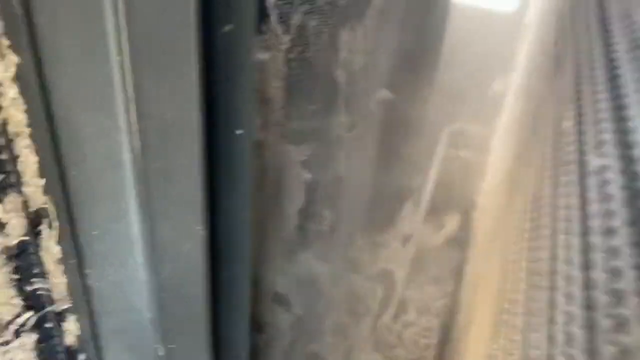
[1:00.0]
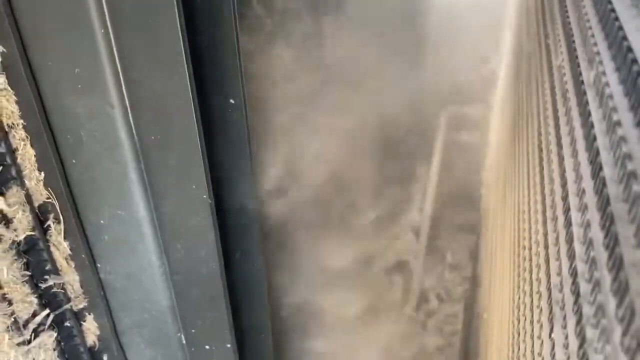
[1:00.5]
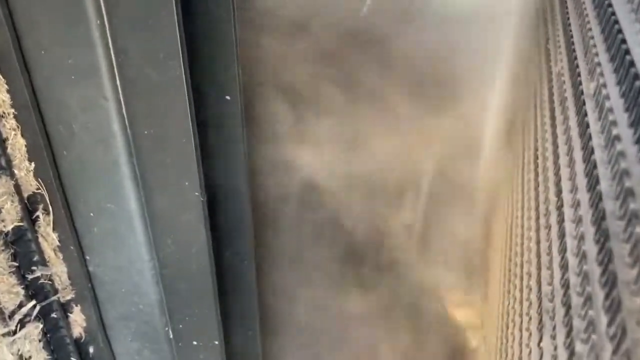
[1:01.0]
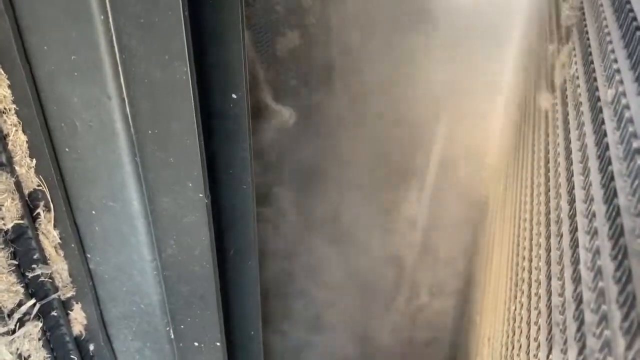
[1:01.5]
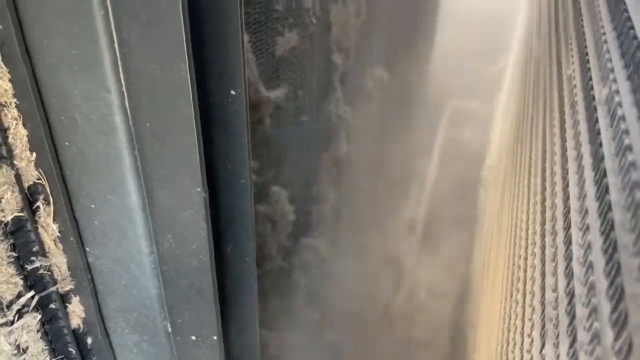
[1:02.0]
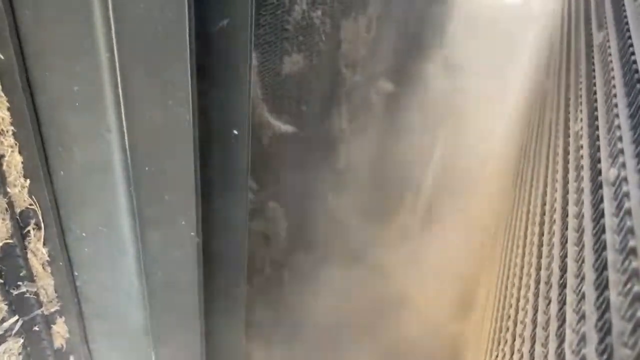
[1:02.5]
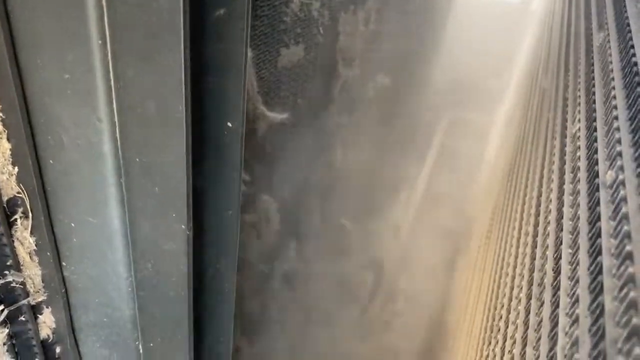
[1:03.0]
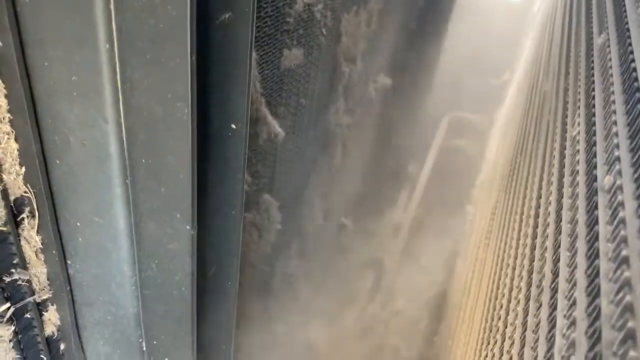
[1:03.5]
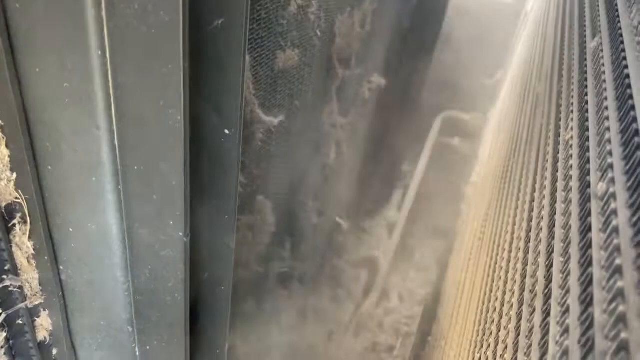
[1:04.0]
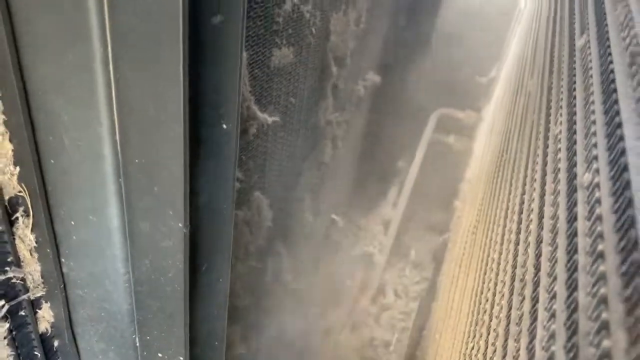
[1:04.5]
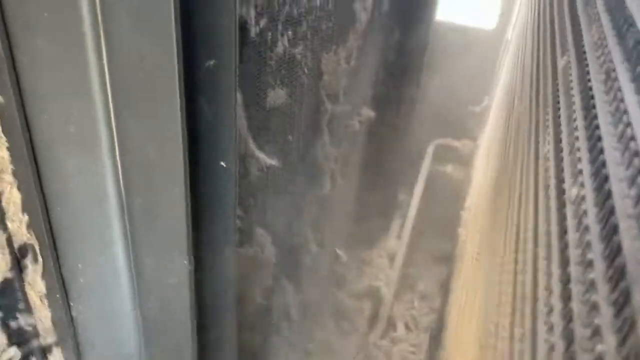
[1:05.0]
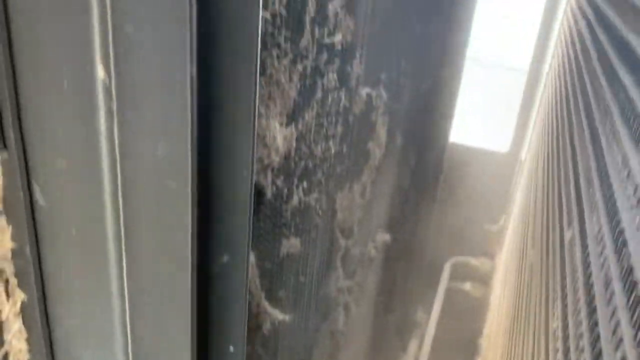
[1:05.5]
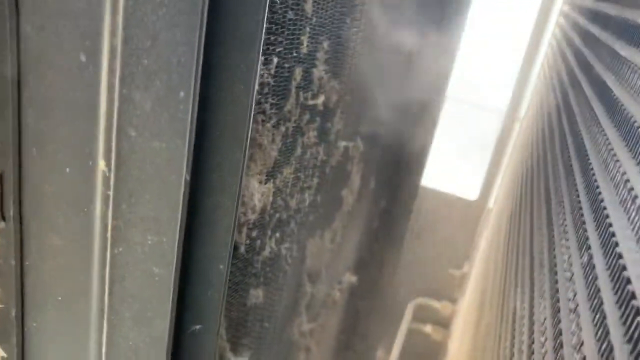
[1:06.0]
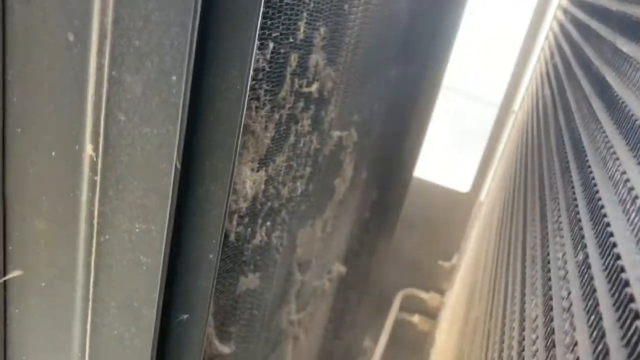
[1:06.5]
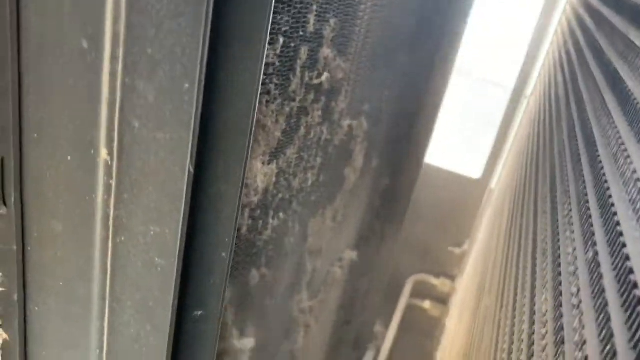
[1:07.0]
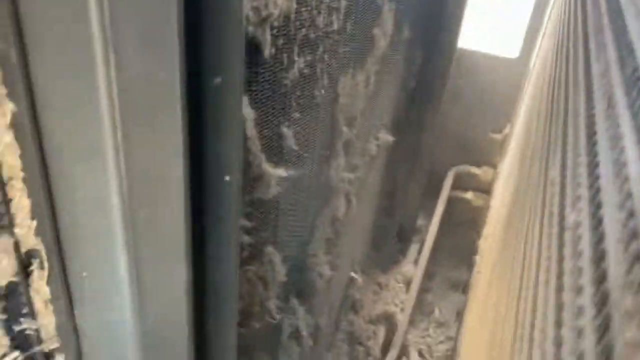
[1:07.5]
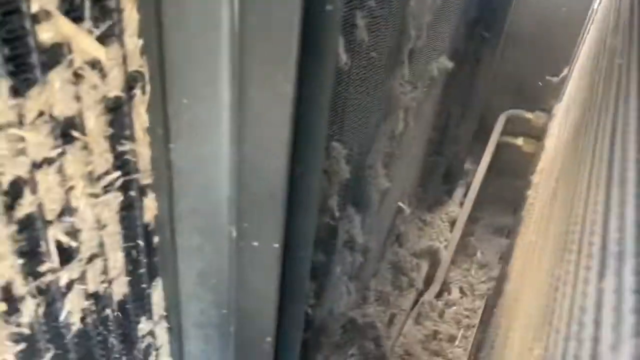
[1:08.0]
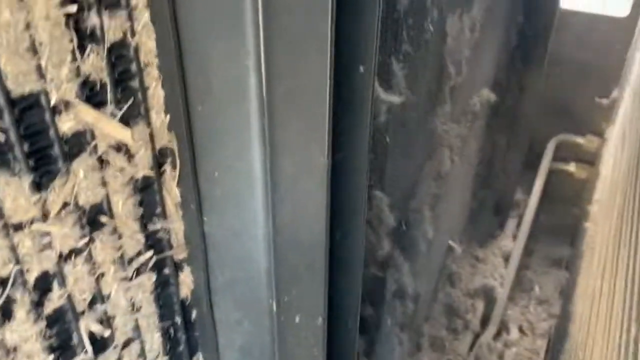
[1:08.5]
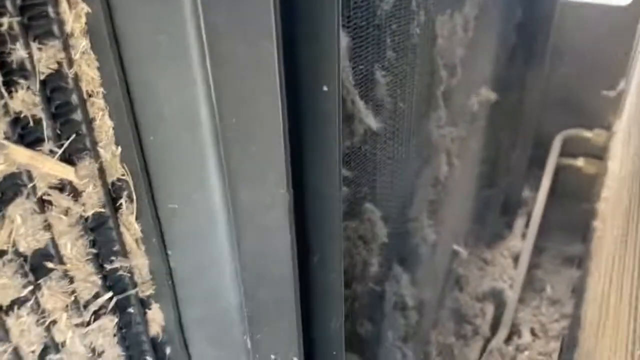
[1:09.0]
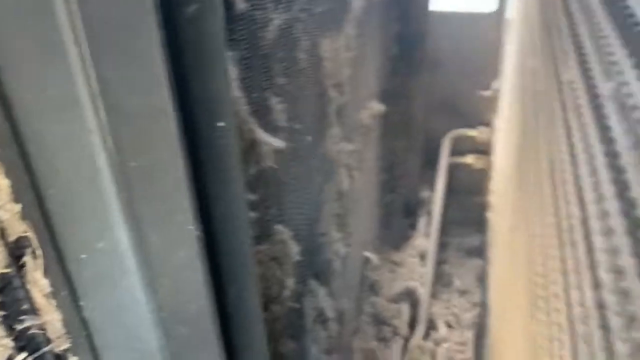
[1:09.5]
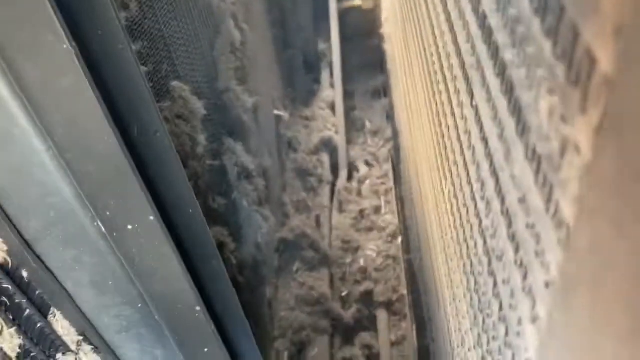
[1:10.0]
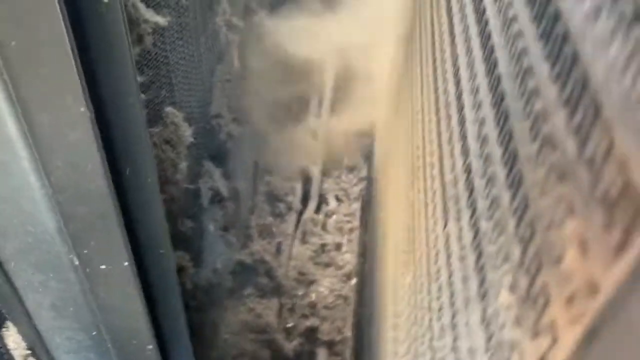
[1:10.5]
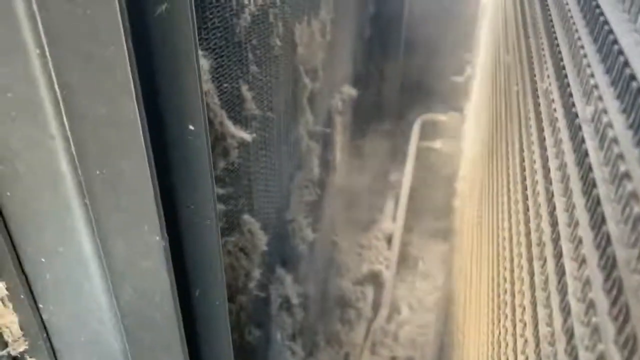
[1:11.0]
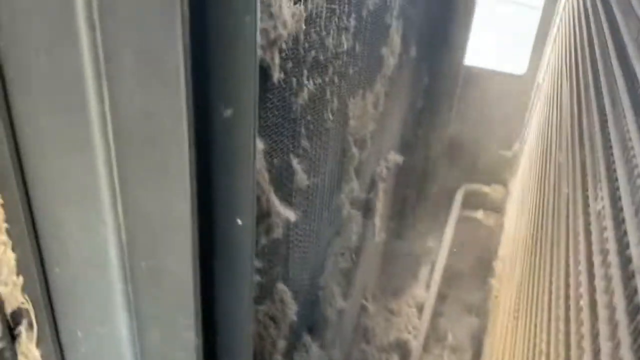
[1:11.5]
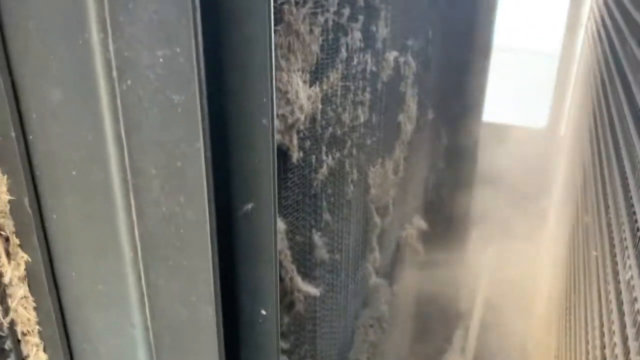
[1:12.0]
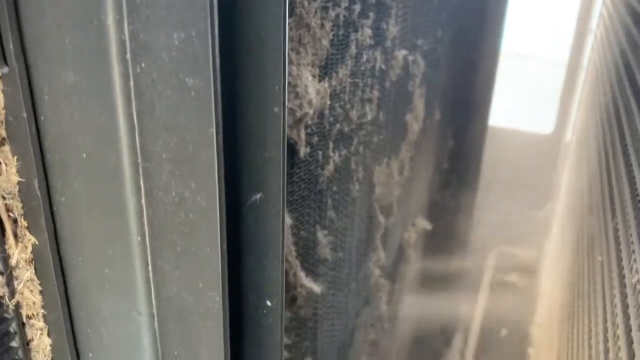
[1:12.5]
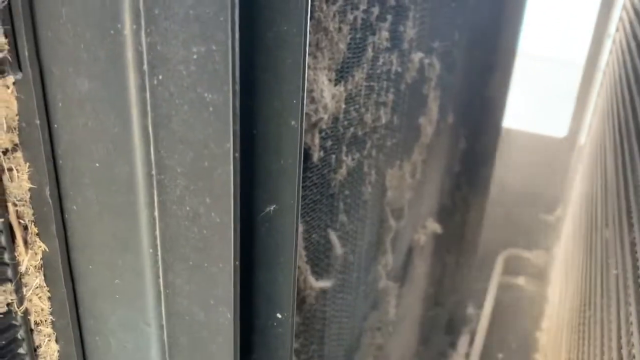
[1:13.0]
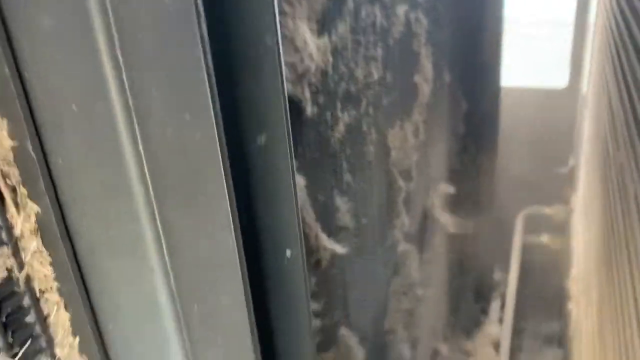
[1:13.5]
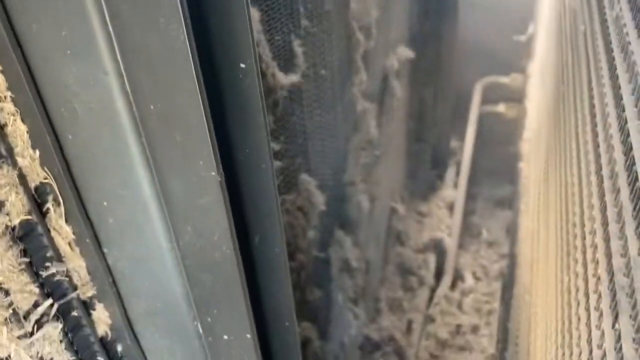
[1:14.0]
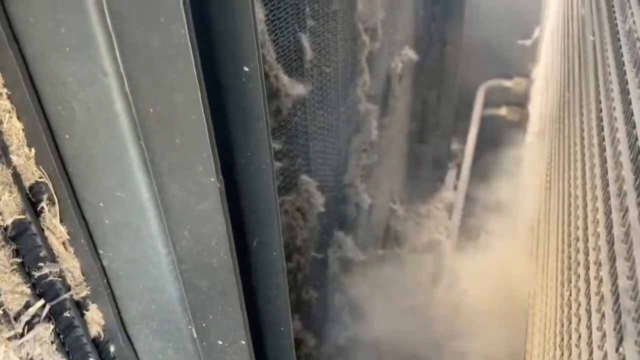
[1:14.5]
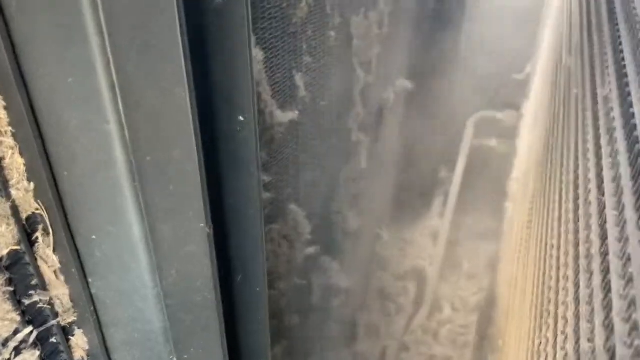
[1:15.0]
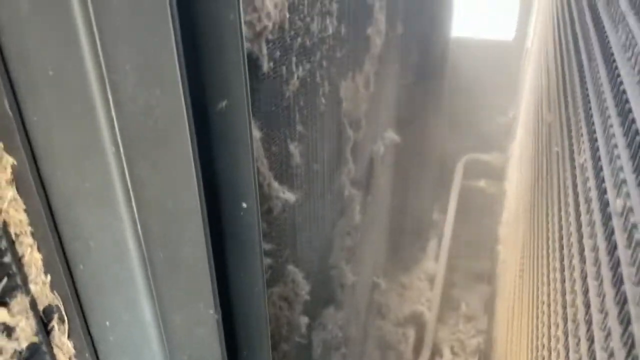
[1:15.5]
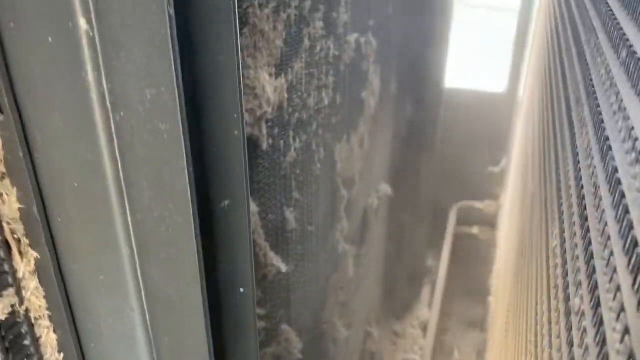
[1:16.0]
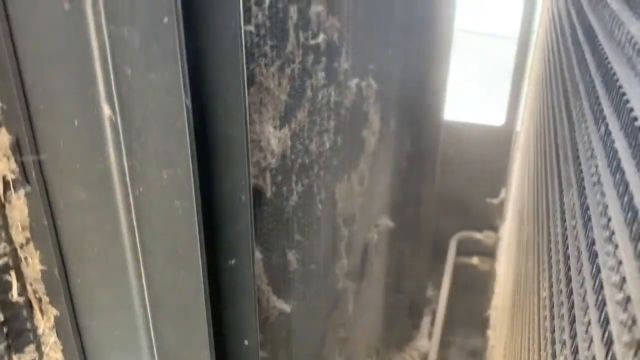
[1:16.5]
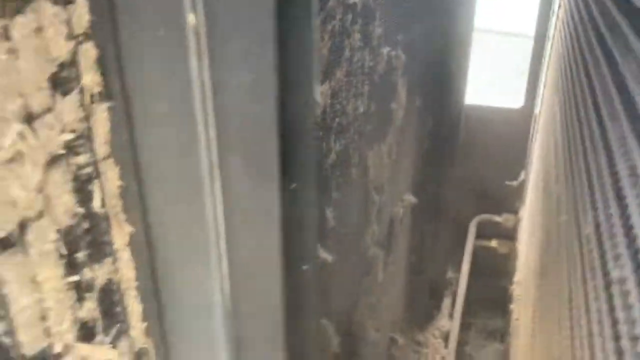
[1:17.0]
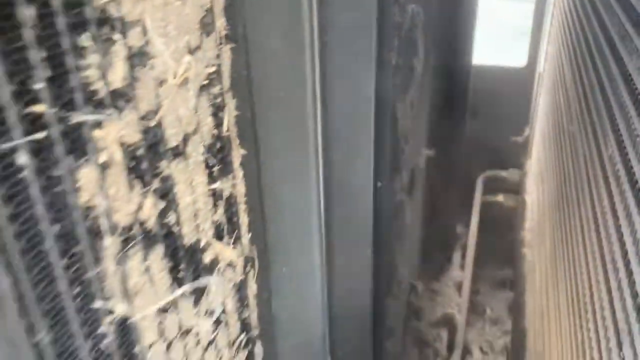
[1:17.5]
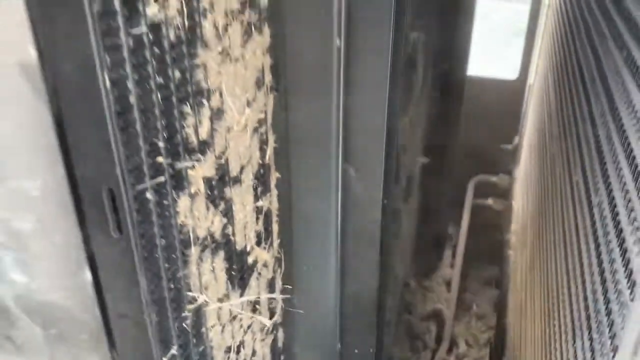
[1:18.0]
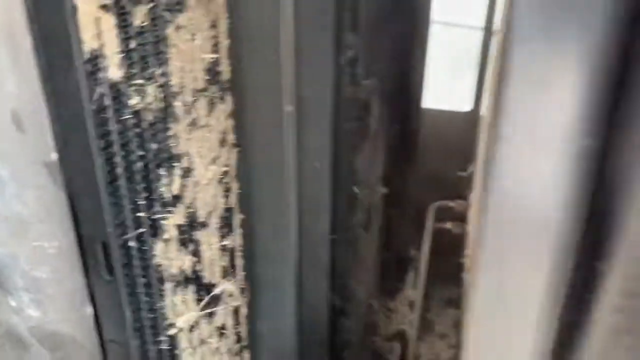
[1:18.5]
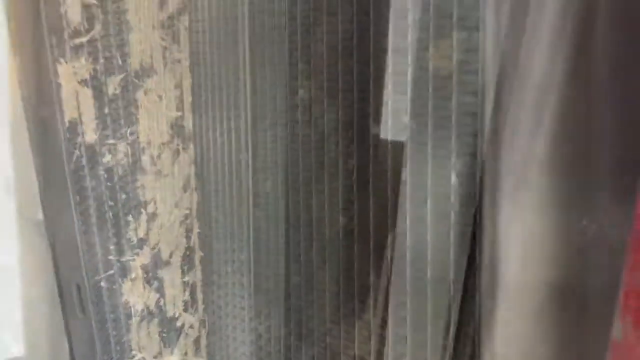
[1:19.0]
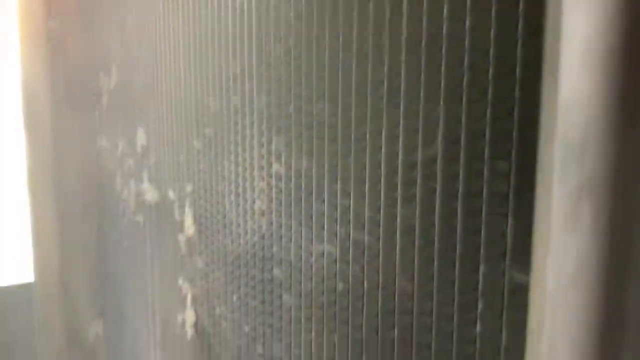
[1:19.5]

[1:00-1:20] Dirt and dust continue to be blown off what looks like the radiator or a filter. Some sort of strong force pushes the debris from the opposite side, and it goes everywhere; a whole bunch of dirt is tossed around inside the small section. Pieces of what looks like grass or dirt fall off the radiator. The air looks very cloudy and dirty with dust, almost like light gray smoke. A lot of debris falls down to the lower level, with pieces that look kind of like molded dead grass clumped together.